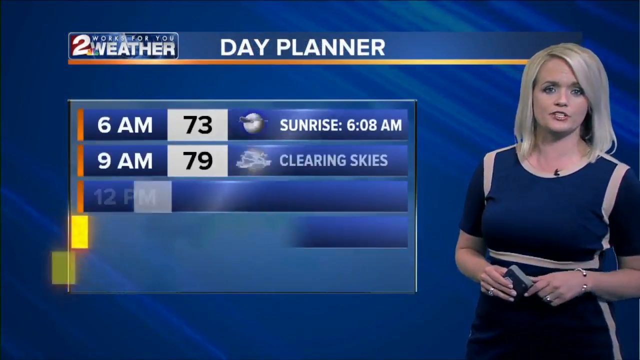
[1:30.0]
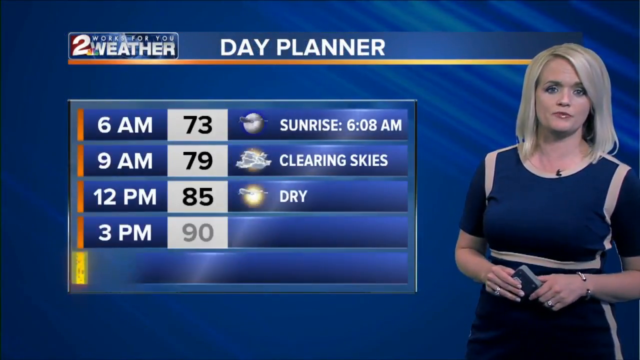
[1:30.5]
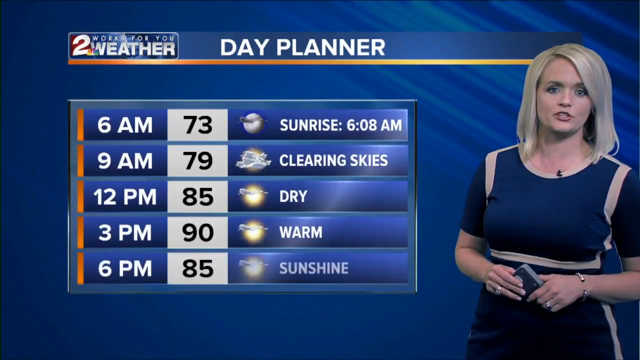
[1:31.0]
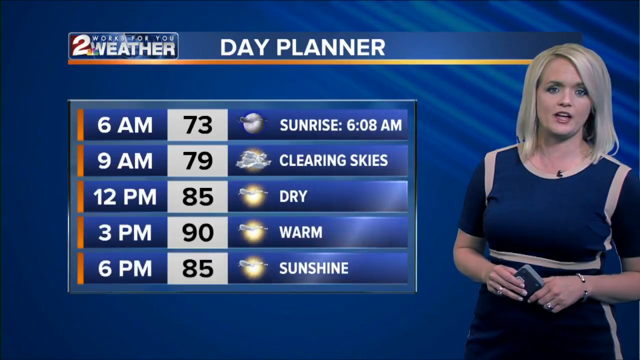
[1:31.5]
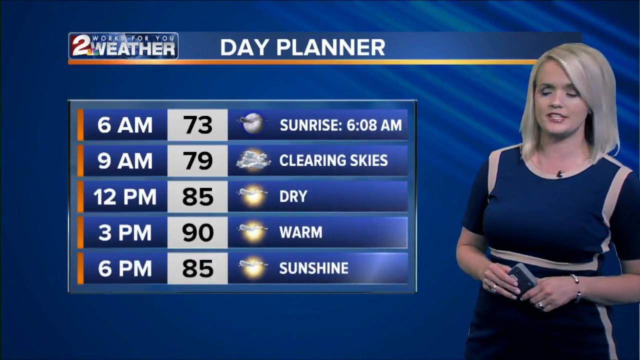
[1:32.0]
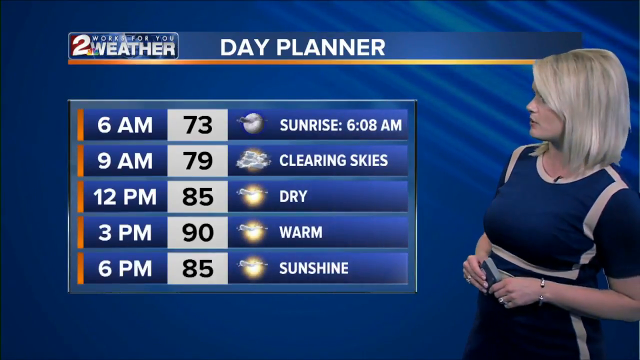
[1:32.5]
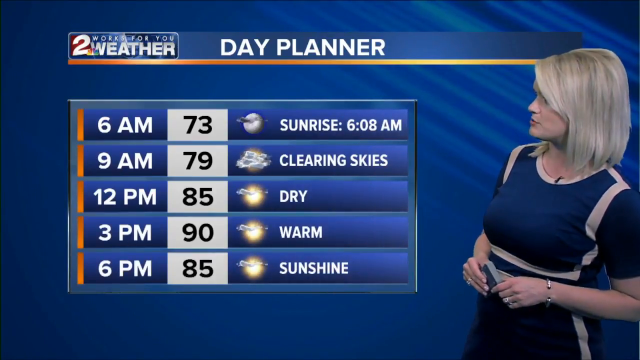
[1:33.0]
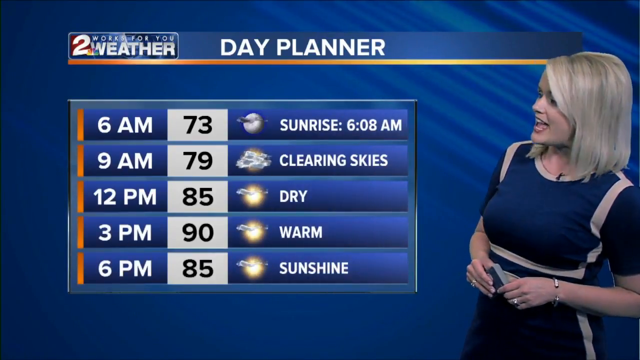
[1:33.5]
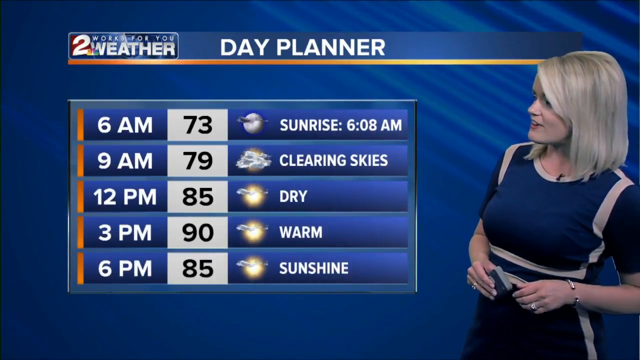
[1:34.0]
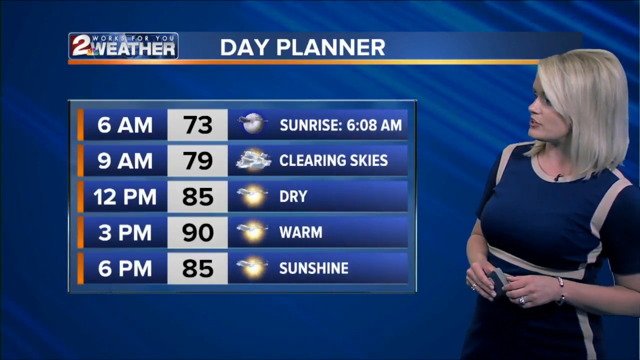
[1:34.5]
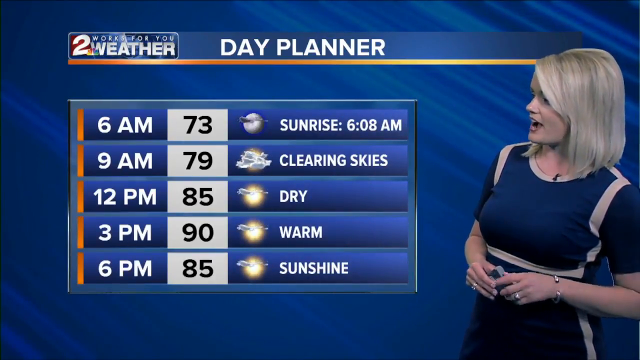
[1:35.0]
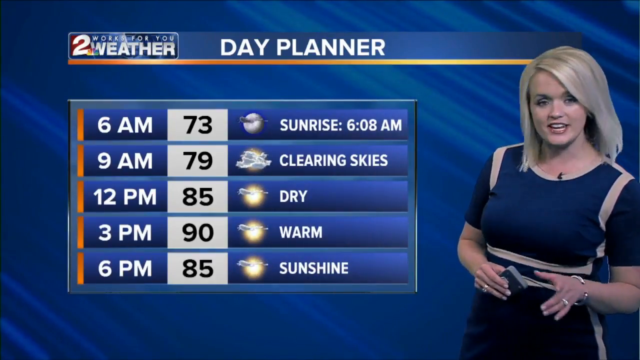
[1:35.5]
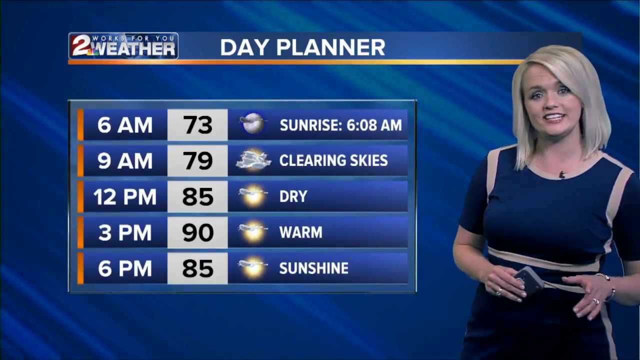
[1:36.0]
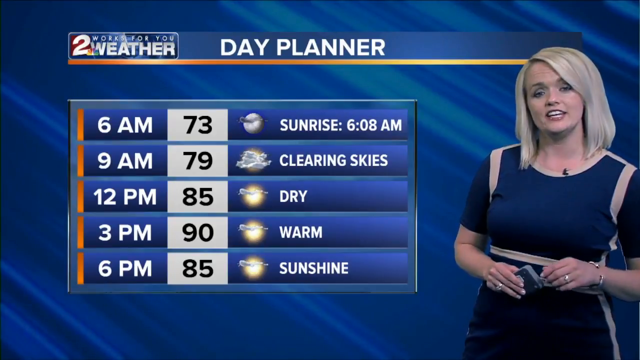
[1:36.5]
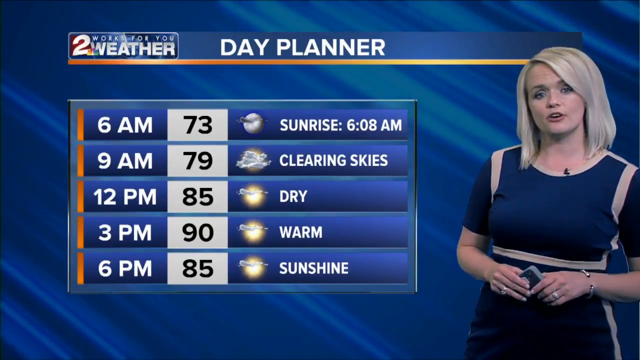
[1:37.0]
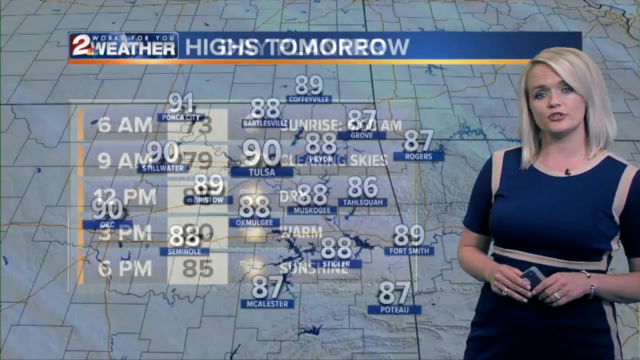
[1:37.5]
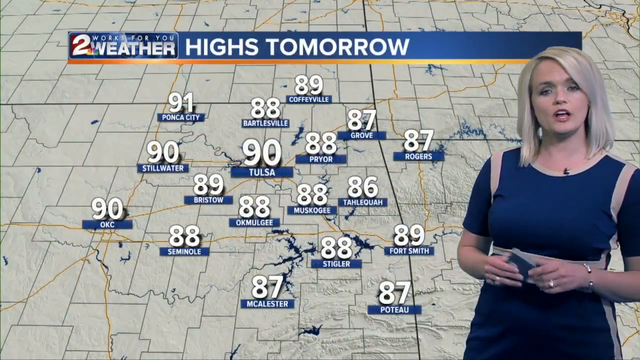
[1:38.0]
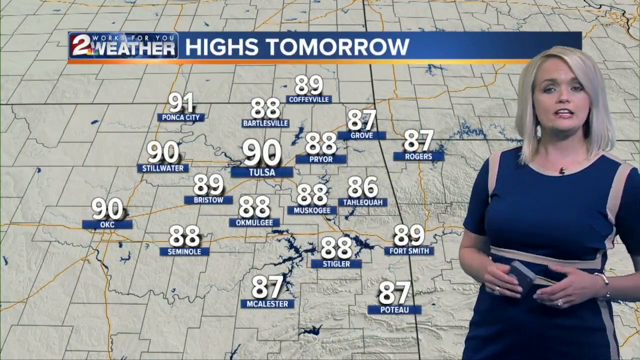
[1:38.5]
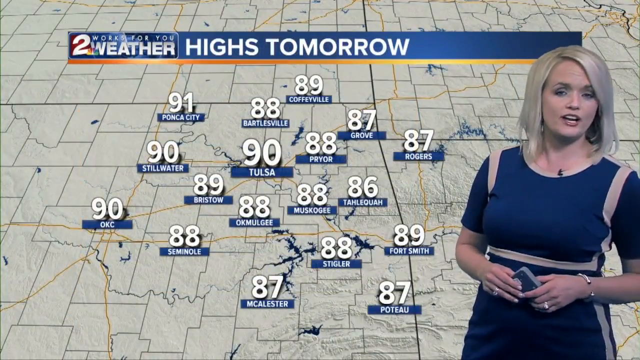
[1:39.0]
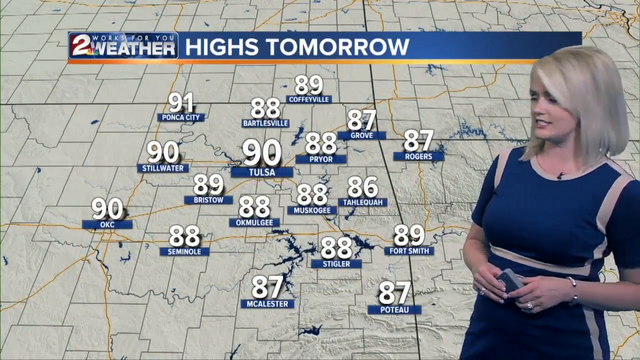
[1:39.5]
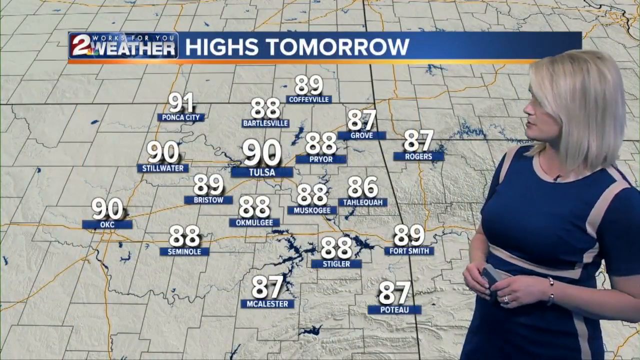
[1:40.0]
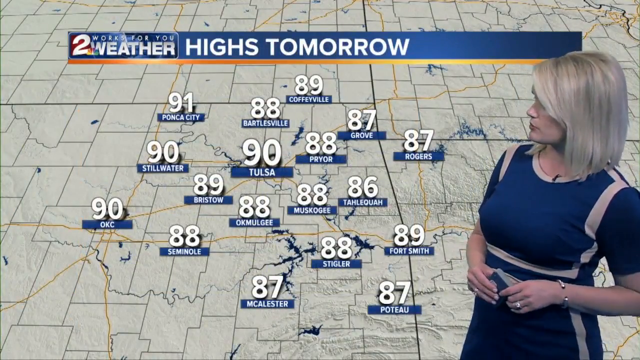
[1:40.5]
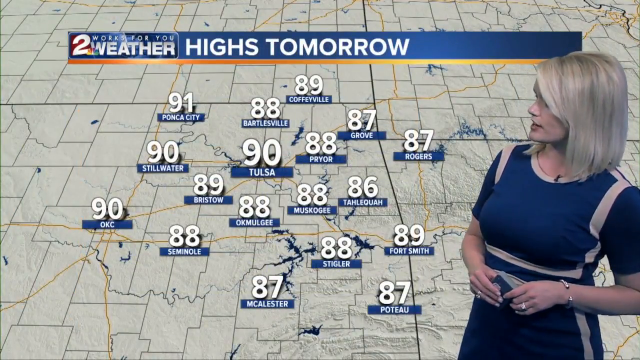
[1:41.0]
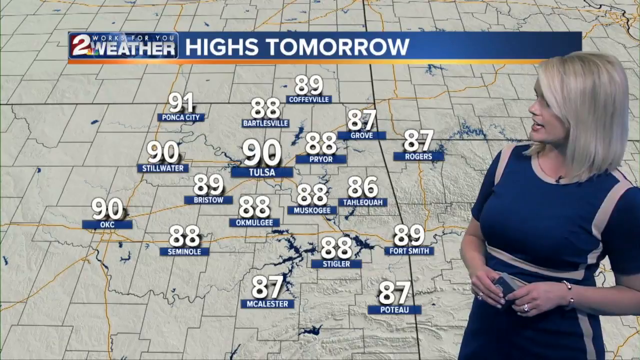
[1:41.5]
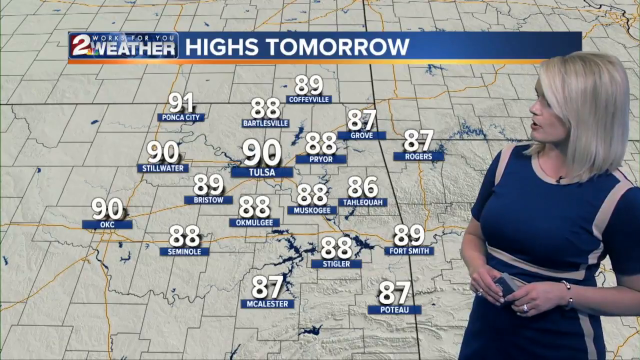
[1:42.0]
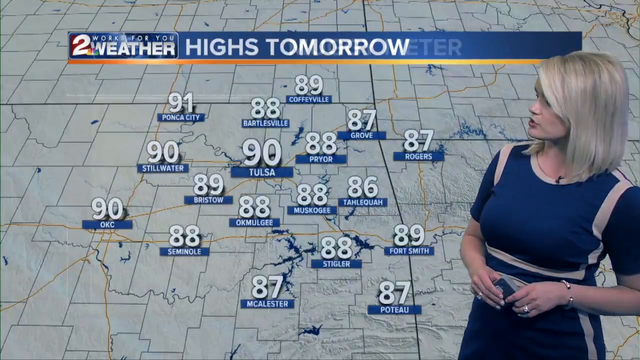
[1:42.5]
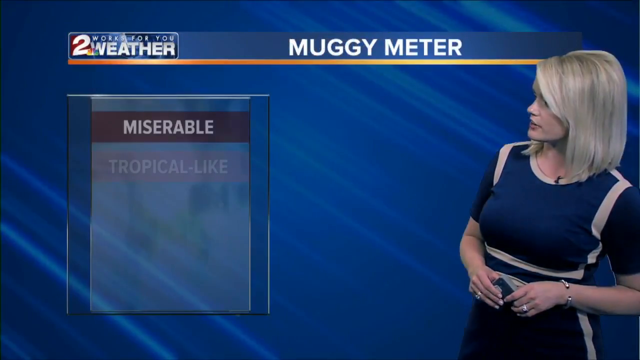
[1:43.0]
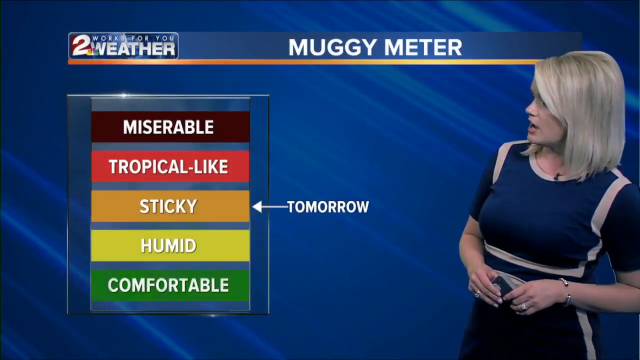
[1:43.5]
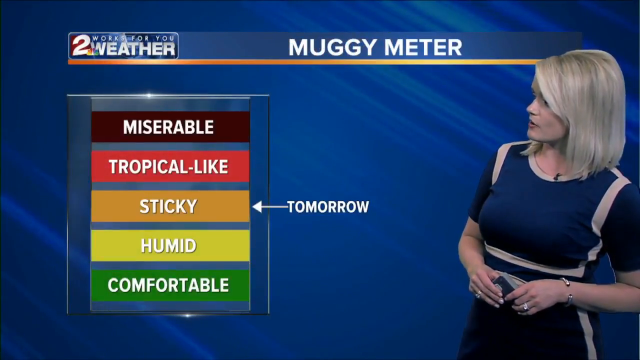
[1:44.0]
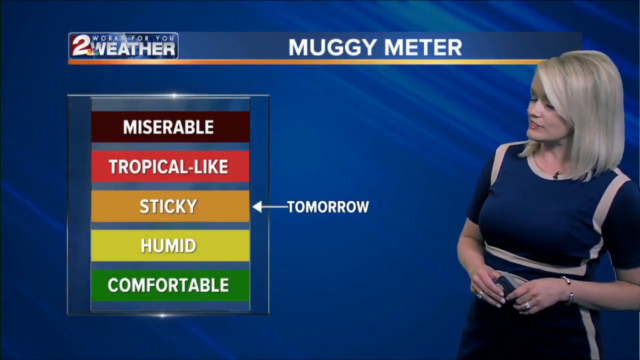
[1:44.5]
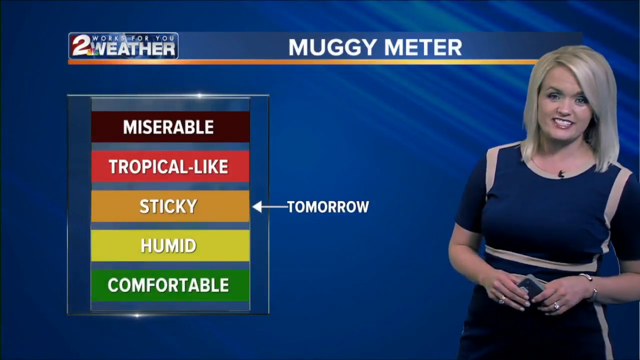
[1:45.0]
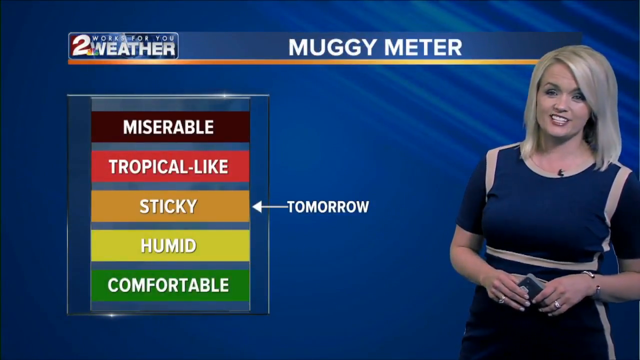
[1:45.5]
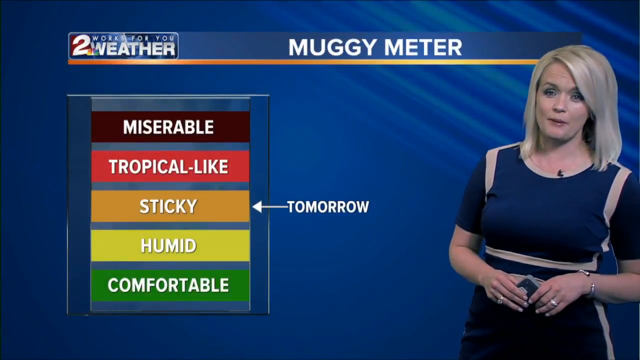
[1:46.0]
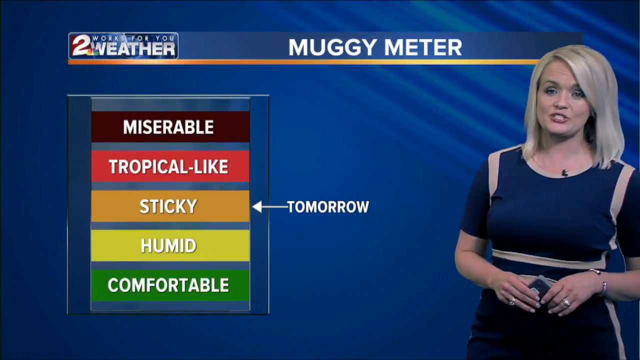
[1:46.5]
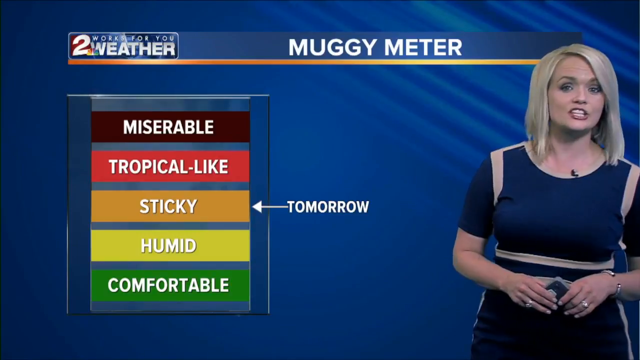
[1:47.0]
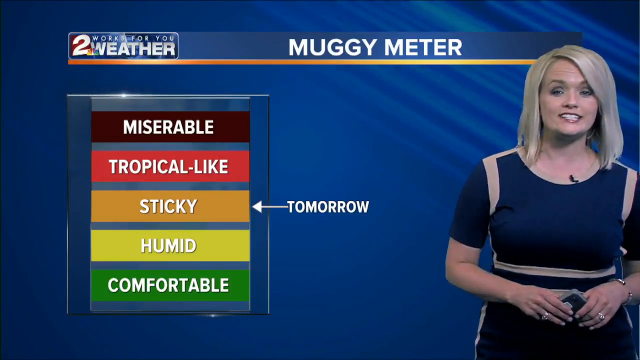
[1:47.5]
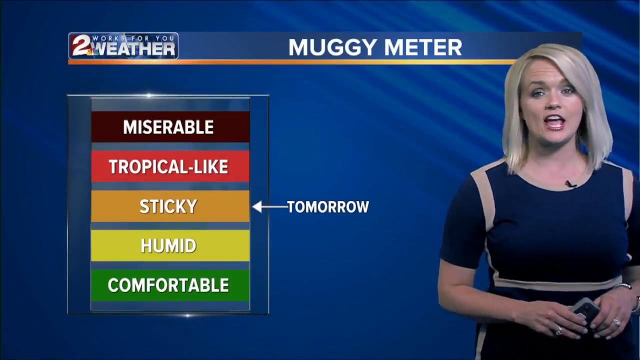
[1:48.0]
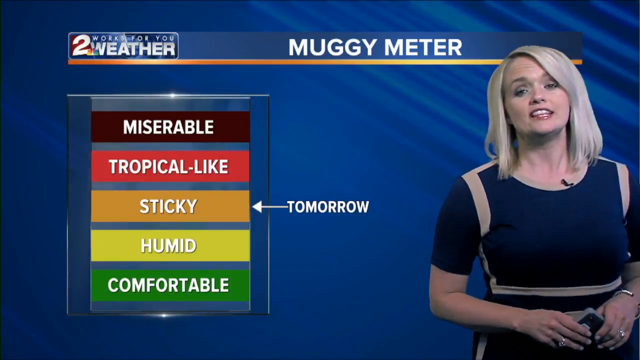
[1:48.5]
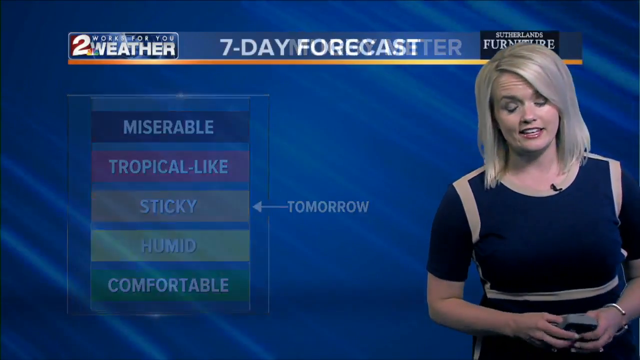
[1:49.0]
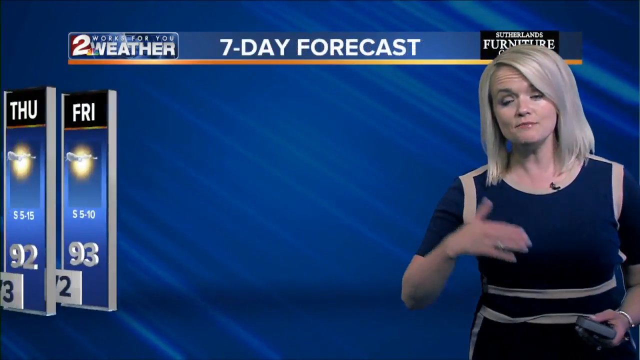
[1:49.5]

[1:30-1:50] The day planner graphic is up, with the weather anchor on the right, her straight blonde hair shoulder-length, wearing the blue dress with tan stripes around the shoulders and waist. The day planner pops up starting at 6 a.m. with a temperature of 73 and sunrise at 6:08 a.m., then shows the weather through the day from 6 a.m. to 6 p.m., with temperatures going from 73 to a high of 85. A new graphic shows a close-up map of Oklahoma reading "highs tomorrow," with various temperatures, including 90 for Tulsa, as she talks. Next she brings up a screen reading "muggy meter," with levels listed from top to bottom including miserable, tropical, sticky, humid and comfortable, color-coded in order from dark maroon to red, orange, yellow and green. An arrow labeled "tomorrow" points at sticky, which is in the middle and orange. The anchor keeps talking, and the screen changes to a seven-day forecast.